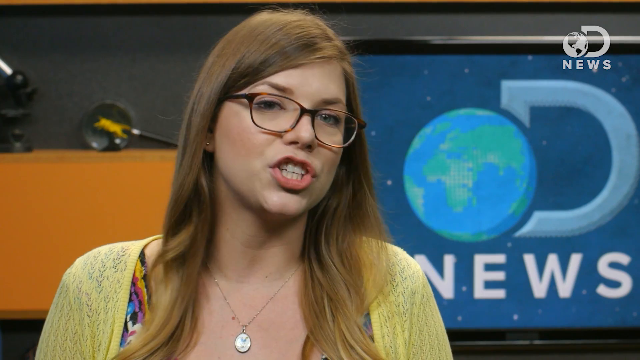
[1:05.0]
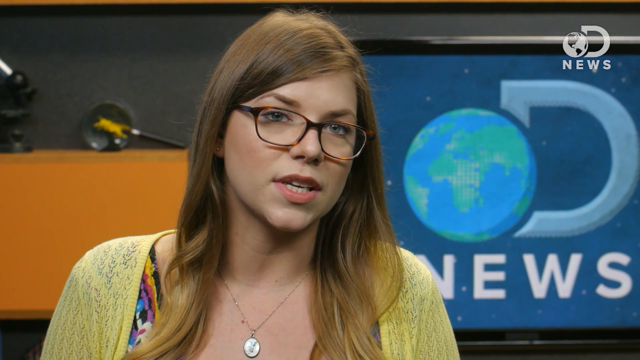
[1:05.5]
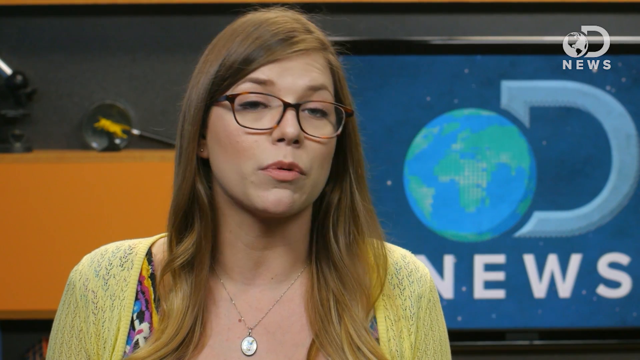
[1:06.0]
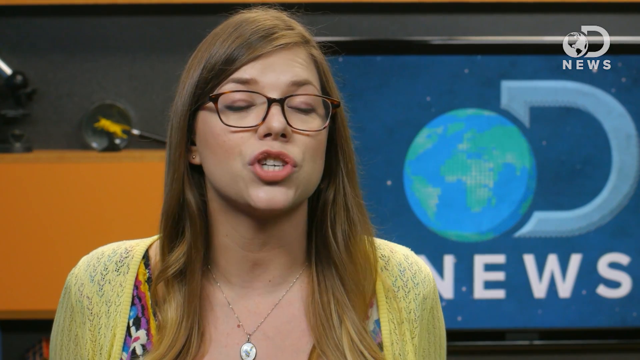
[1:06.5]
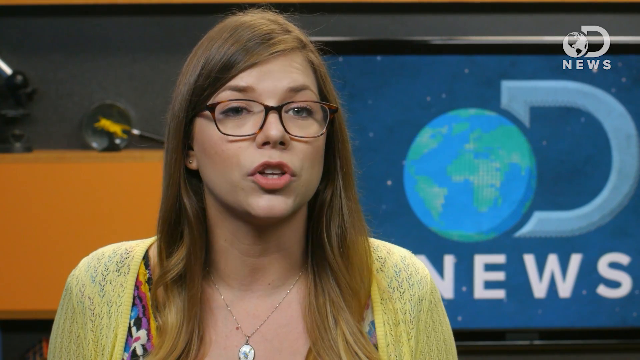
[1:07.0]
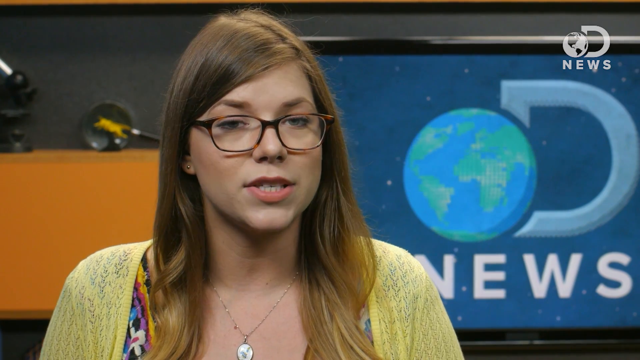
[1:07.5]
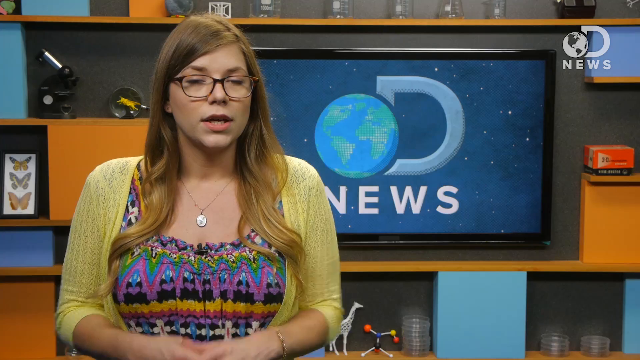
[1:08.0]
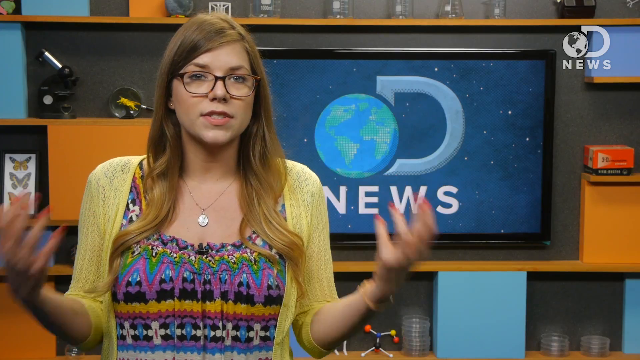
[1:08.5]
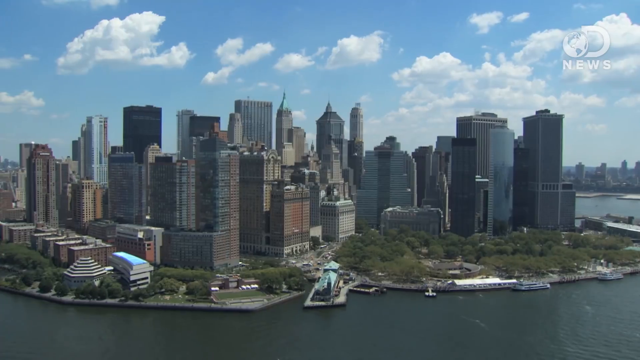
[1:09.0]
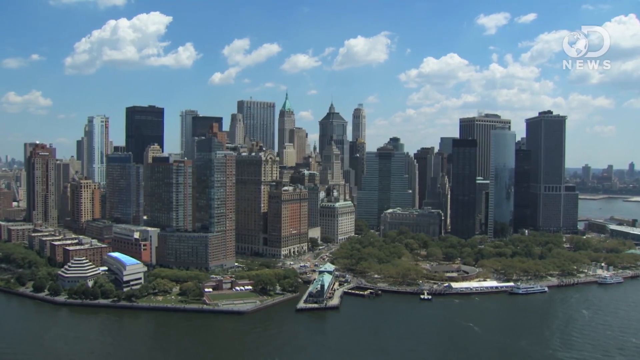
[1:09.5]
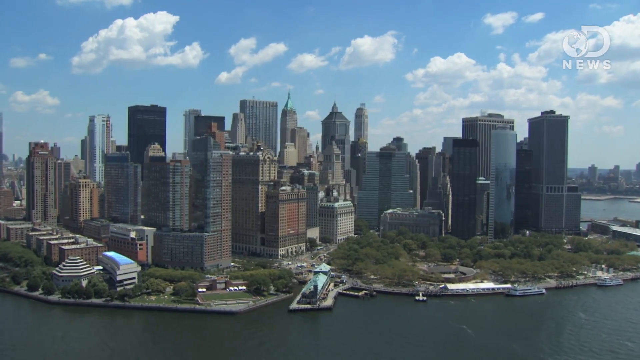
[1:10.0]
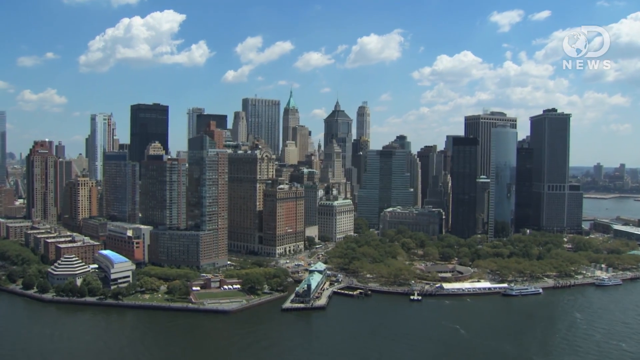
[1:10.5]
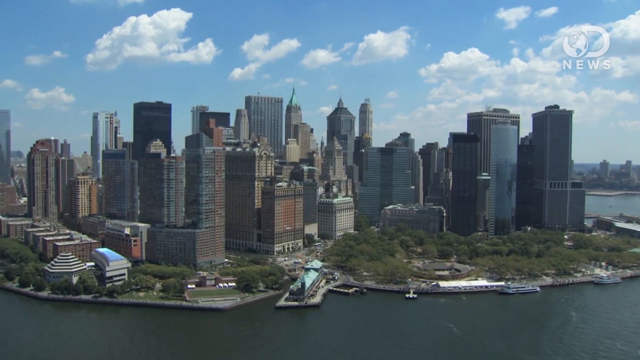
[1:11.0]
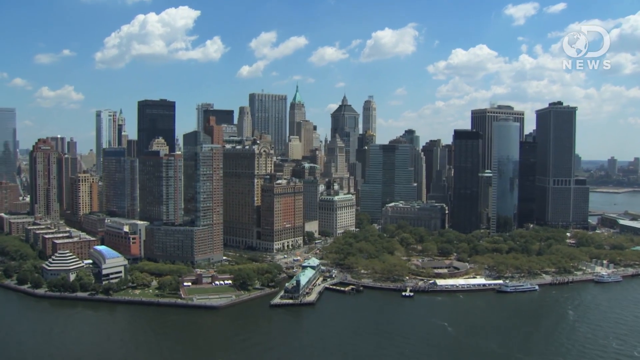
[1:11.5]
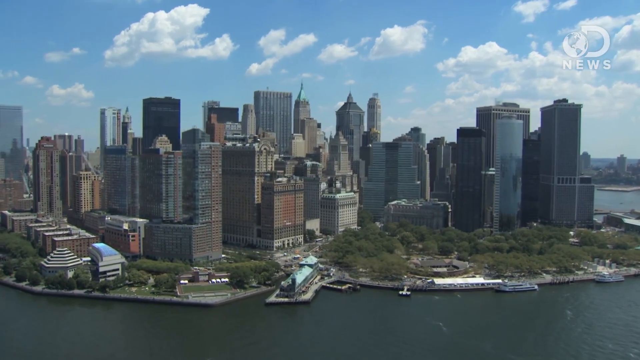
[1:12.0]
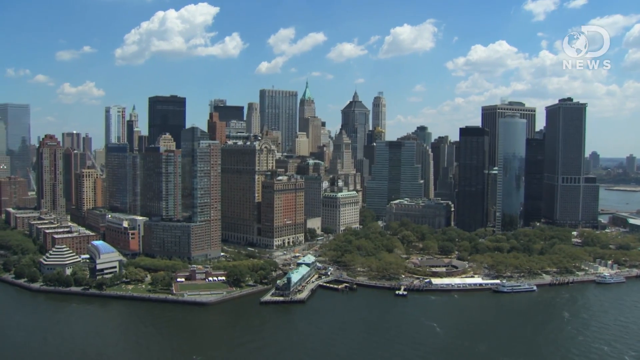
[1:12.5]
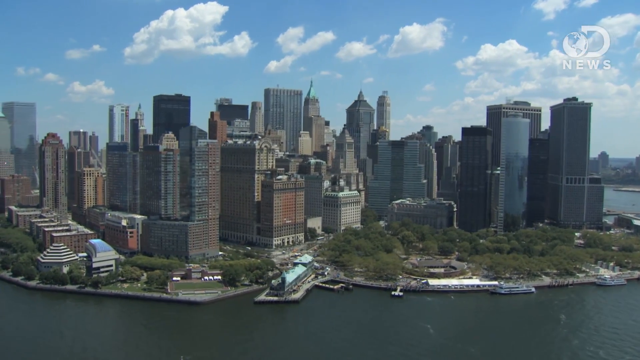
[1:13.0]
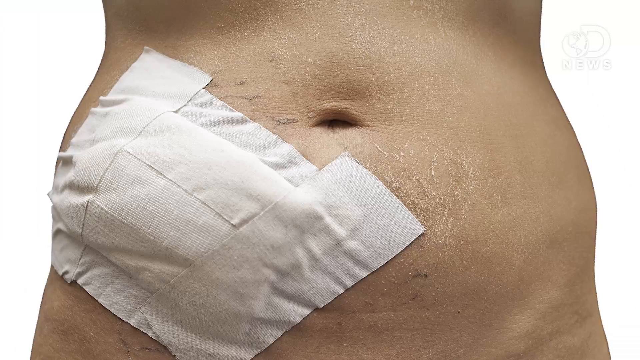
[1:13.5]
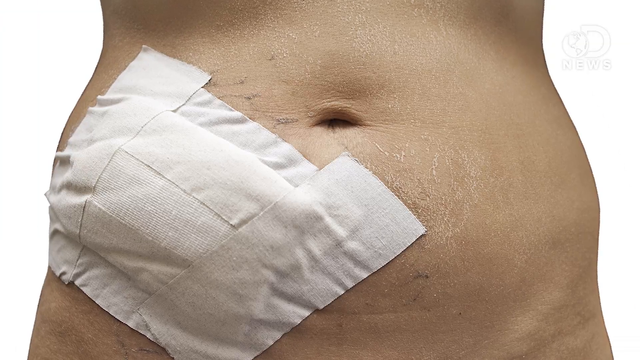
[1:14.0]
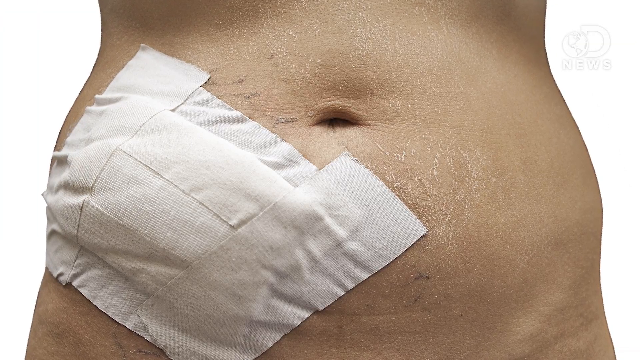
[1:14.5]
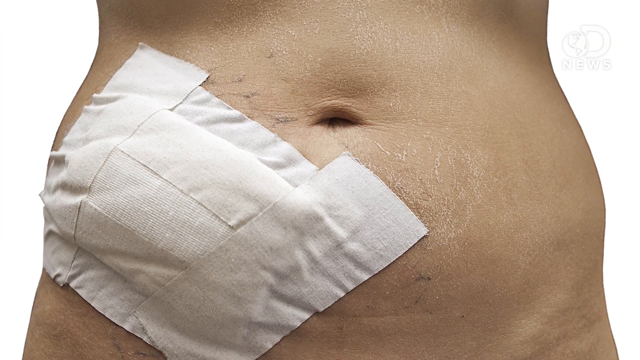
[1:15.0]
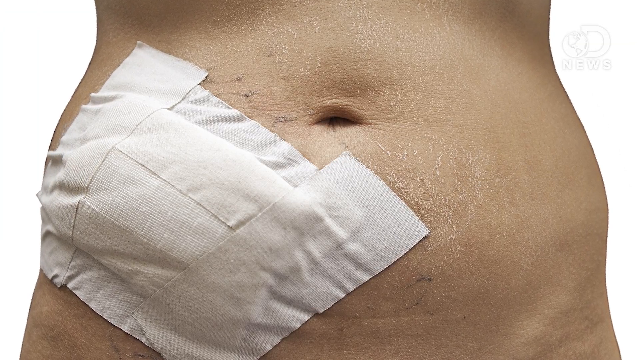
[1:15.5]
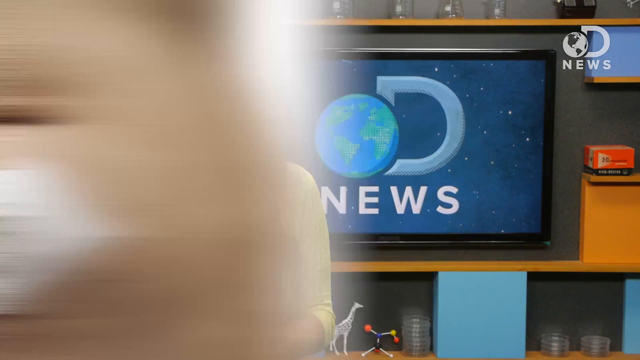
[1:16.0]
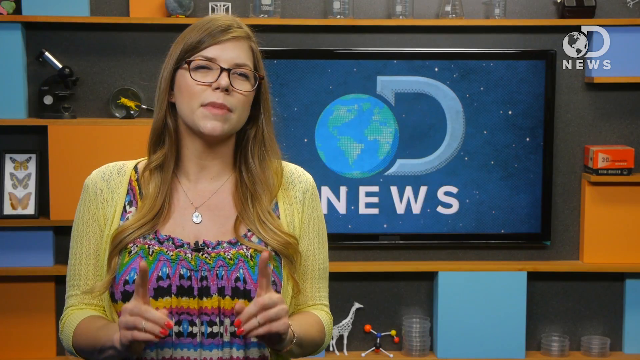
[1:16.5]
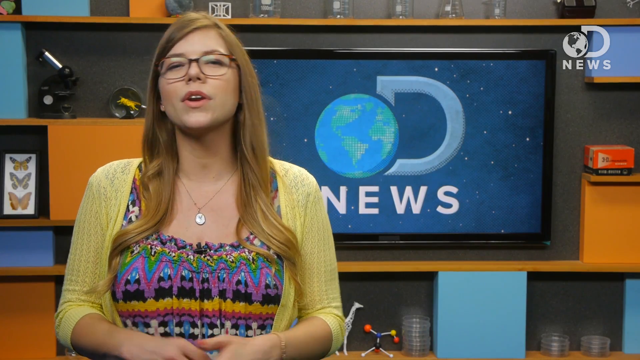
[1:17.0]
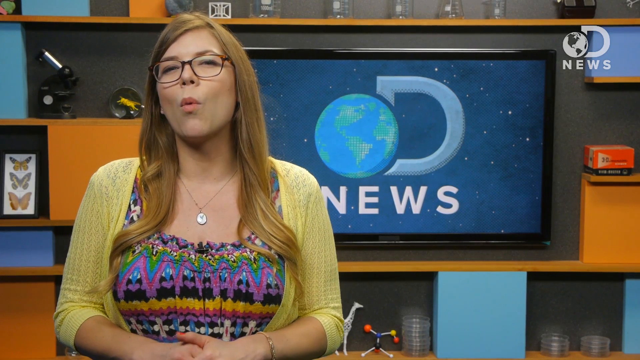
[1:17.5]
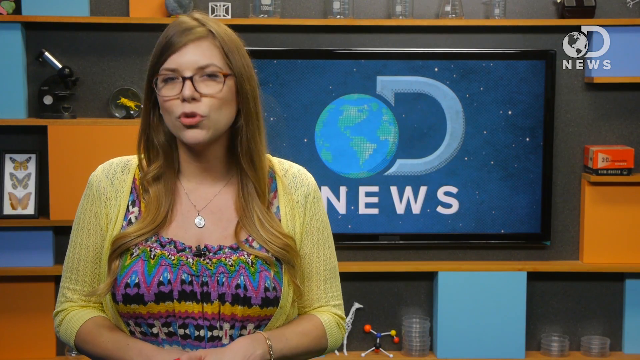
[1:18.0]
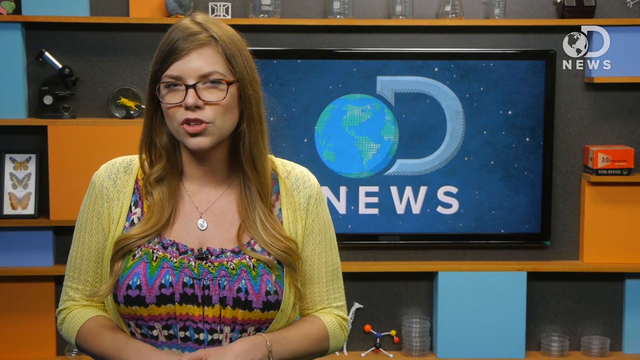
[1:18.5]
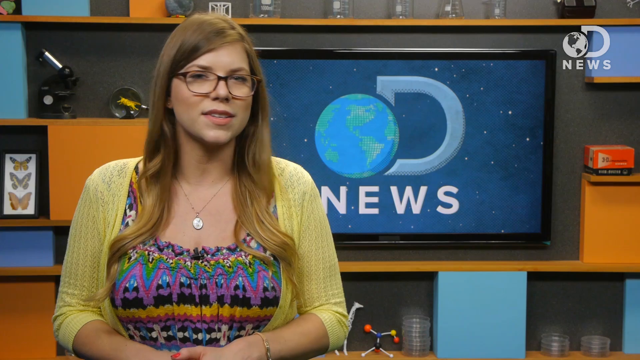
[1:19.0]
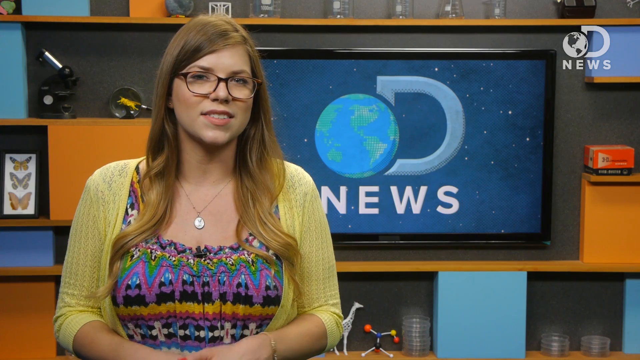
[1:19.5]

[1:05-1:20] A woman tells the news while a large city surrounded by water is shown in the background. The video cuts to someone's abdomen that has apparently had abdominal surgery, with gauze and tape over the area. The belly button is visible, and quite a bit of gauze is on the person's right side, roughly where the appendix would be. A few veins are visible on the abdomen. It could be a real picture or a drawn model of a human body. What looks like white tape or gauze is stretched over the area, probably protecting incisions, possibly where the appendix was operated on or removed. The person is probably Caucasian, not overweight, with little stretching of the skin, and there is a little dry skin in some areas, maybe from a dried medical antiseptic.